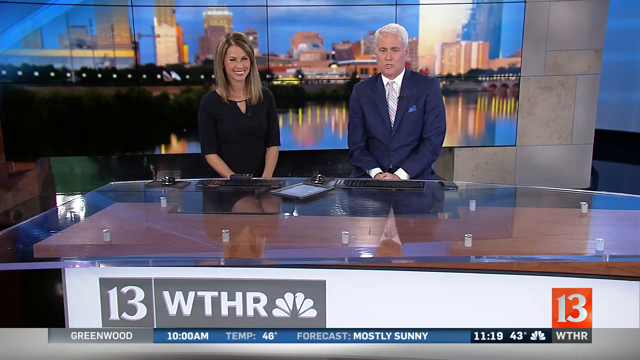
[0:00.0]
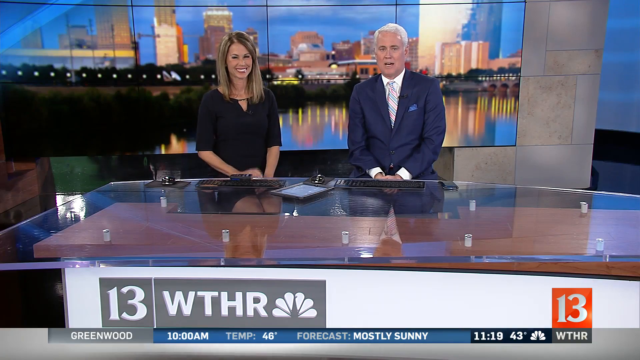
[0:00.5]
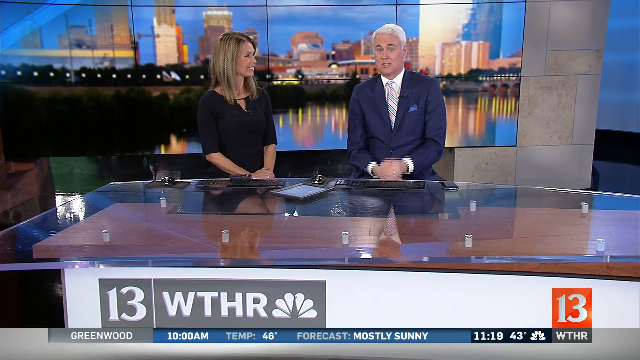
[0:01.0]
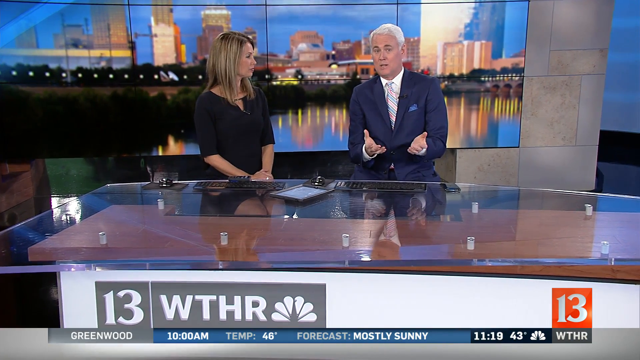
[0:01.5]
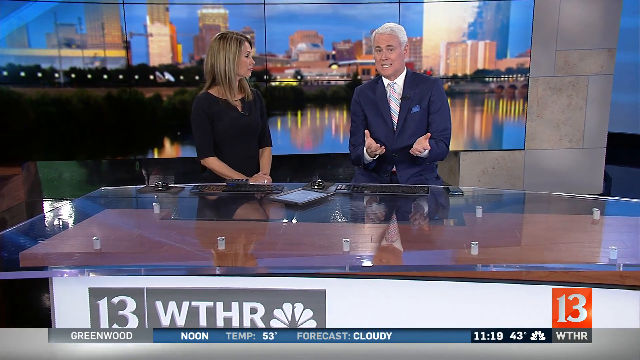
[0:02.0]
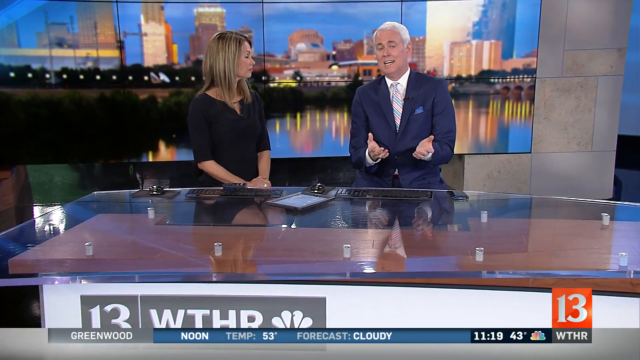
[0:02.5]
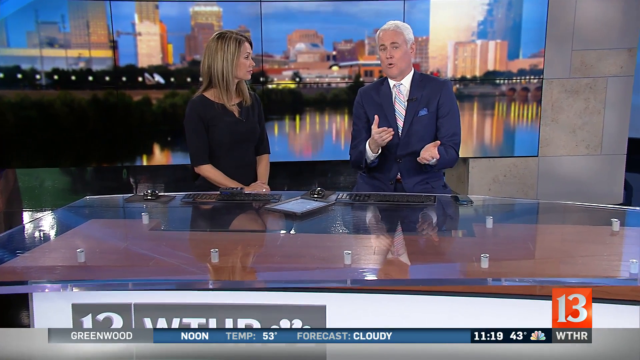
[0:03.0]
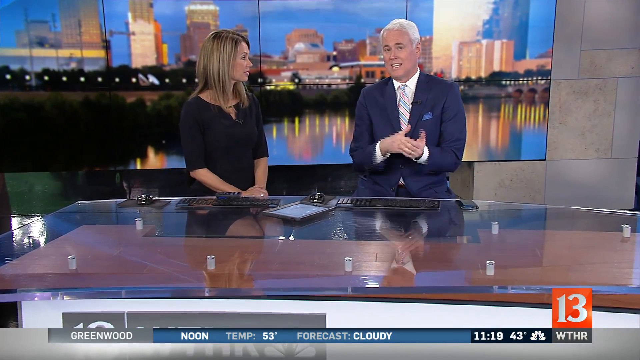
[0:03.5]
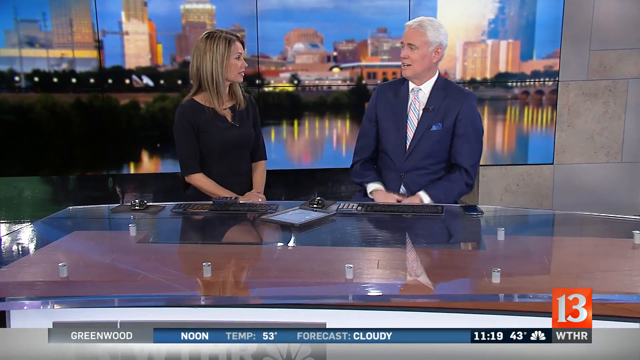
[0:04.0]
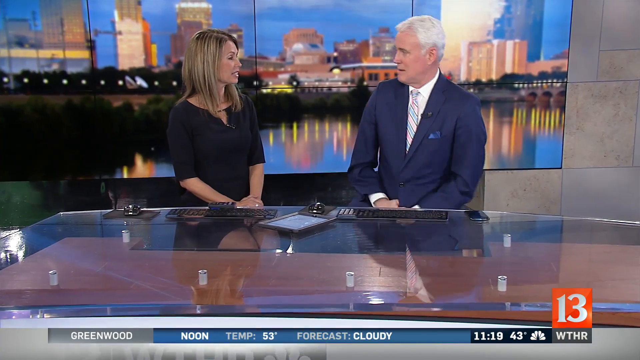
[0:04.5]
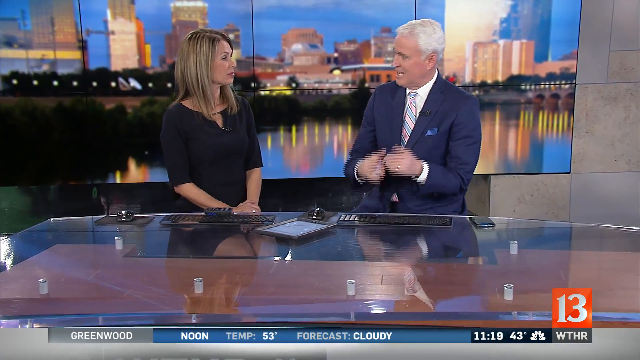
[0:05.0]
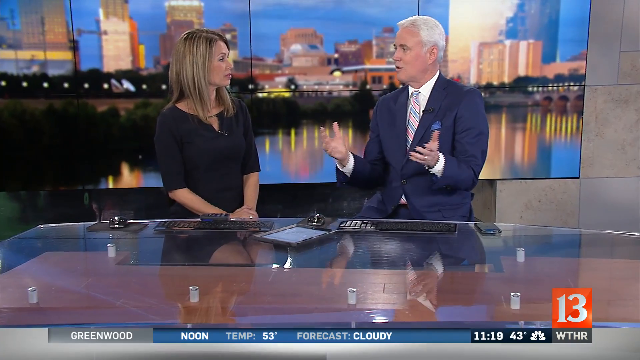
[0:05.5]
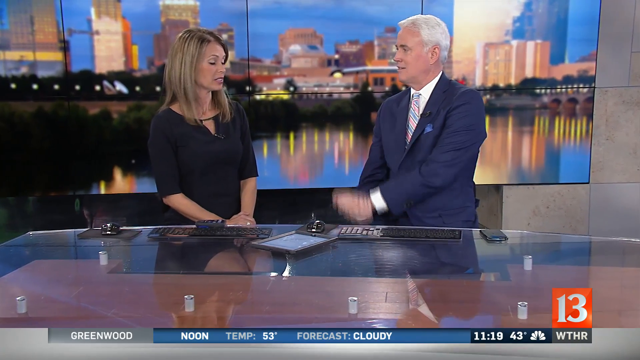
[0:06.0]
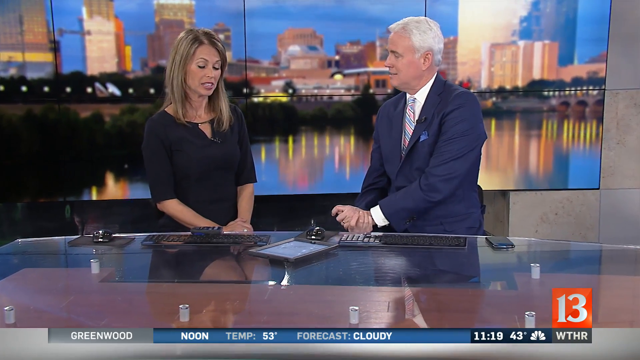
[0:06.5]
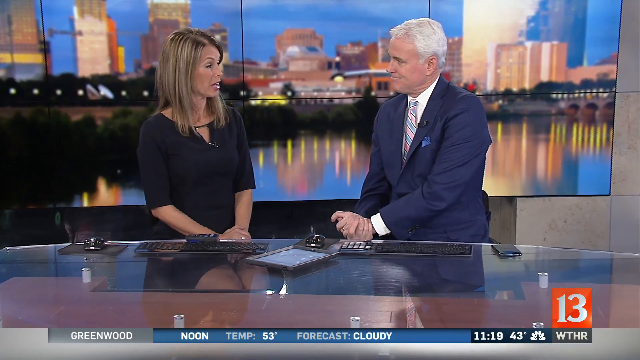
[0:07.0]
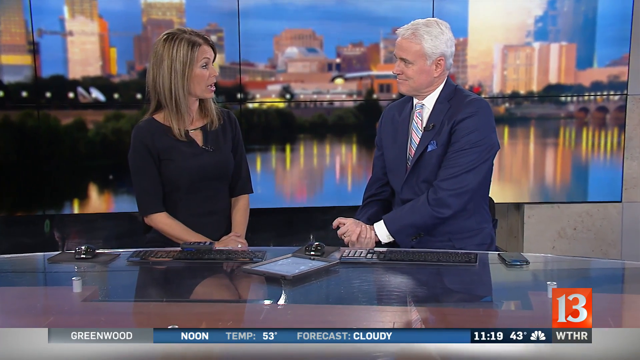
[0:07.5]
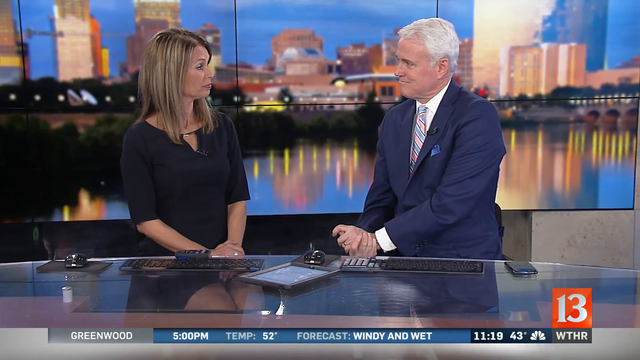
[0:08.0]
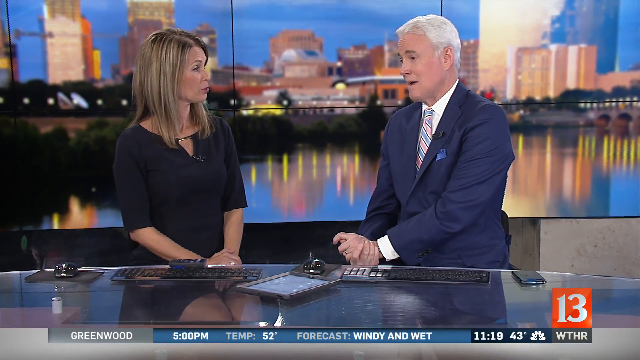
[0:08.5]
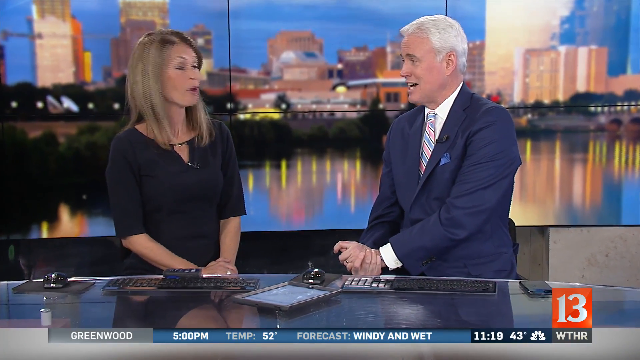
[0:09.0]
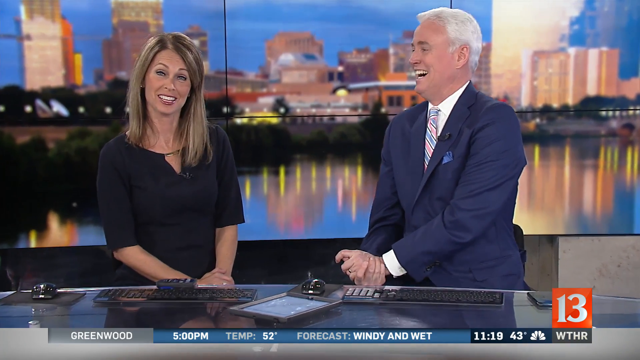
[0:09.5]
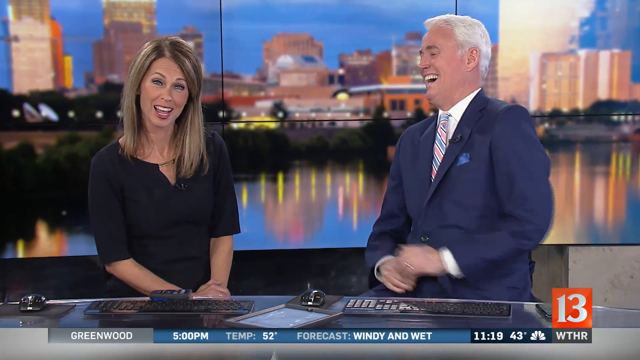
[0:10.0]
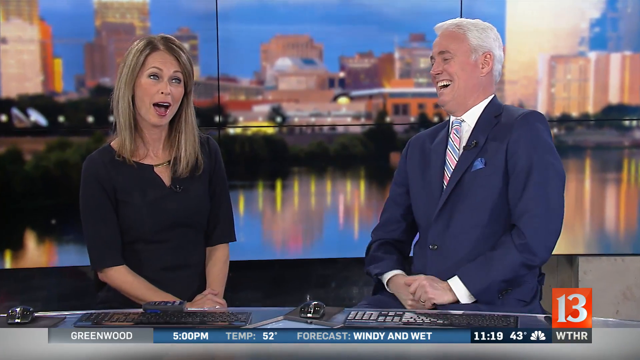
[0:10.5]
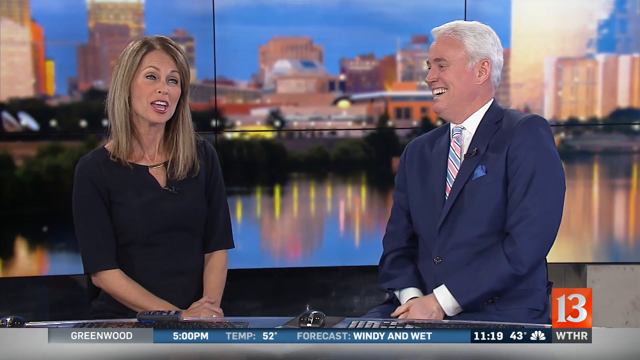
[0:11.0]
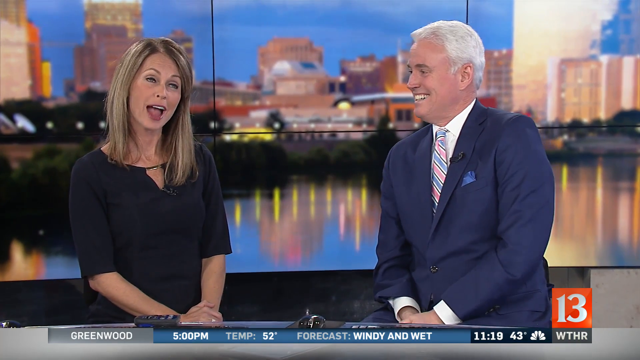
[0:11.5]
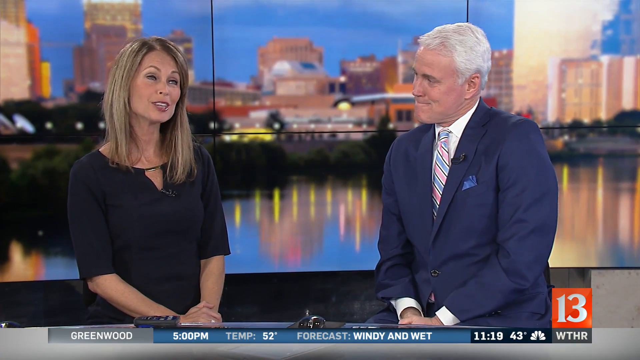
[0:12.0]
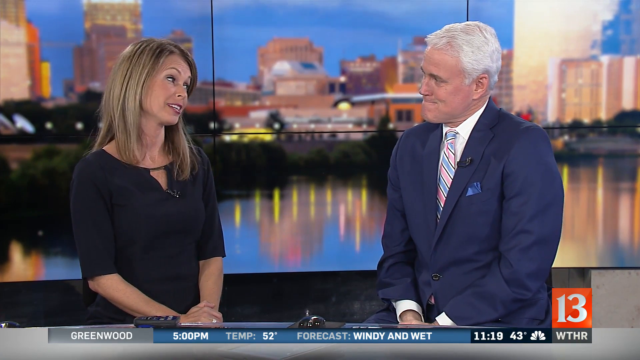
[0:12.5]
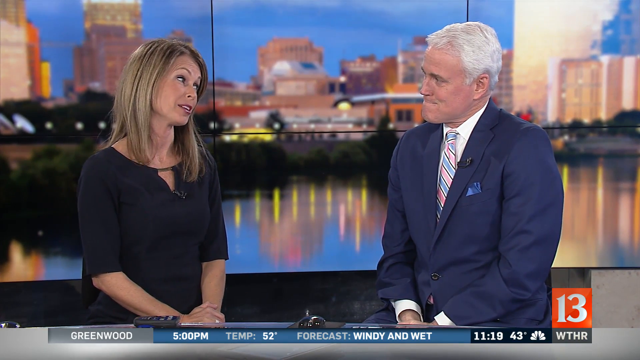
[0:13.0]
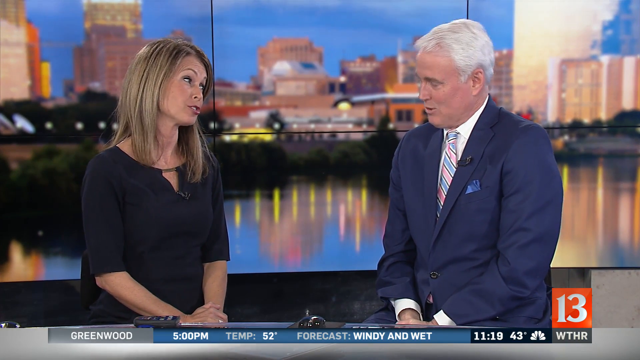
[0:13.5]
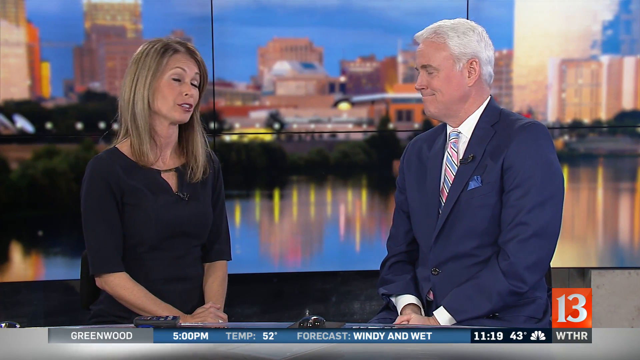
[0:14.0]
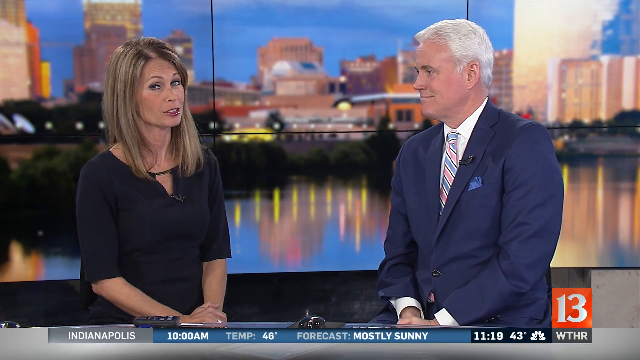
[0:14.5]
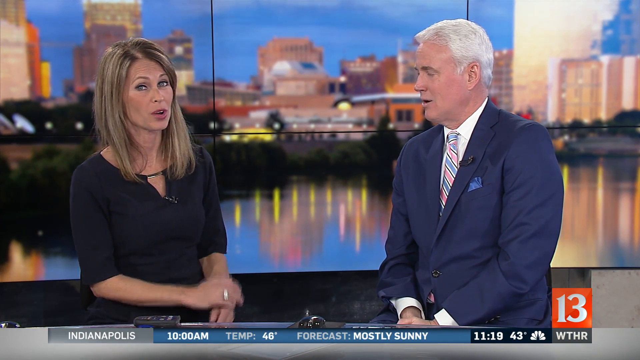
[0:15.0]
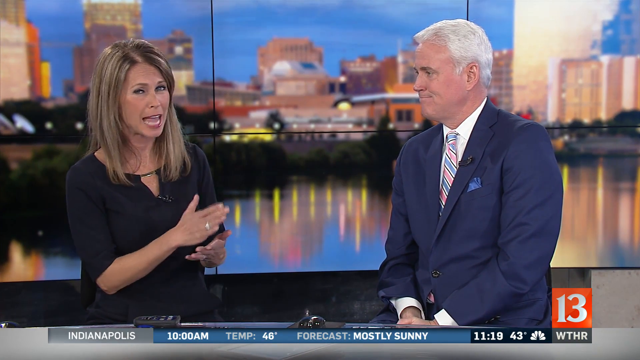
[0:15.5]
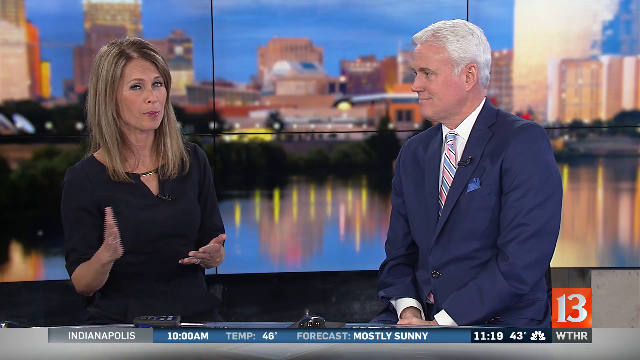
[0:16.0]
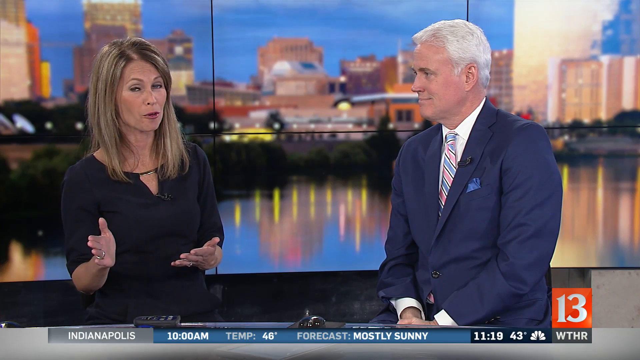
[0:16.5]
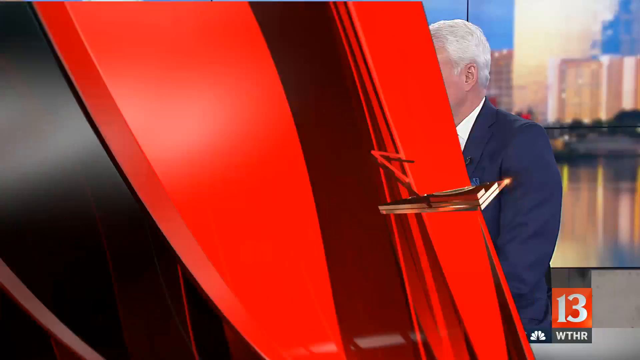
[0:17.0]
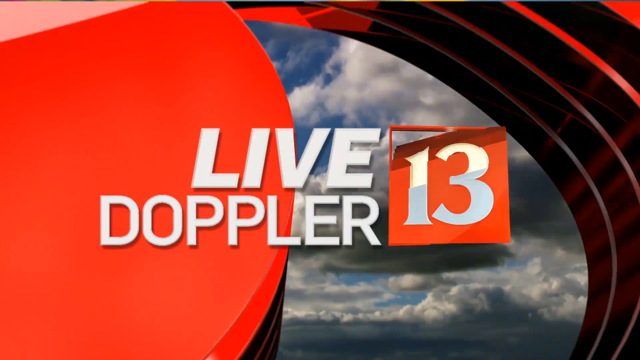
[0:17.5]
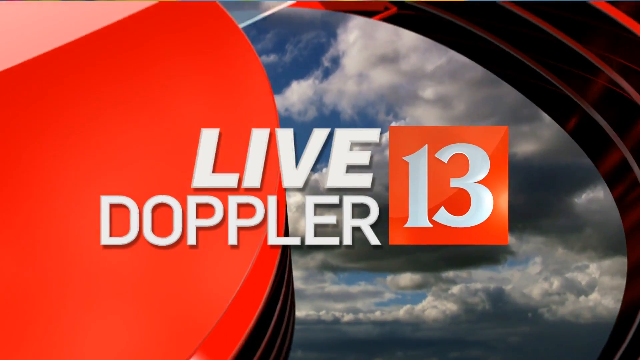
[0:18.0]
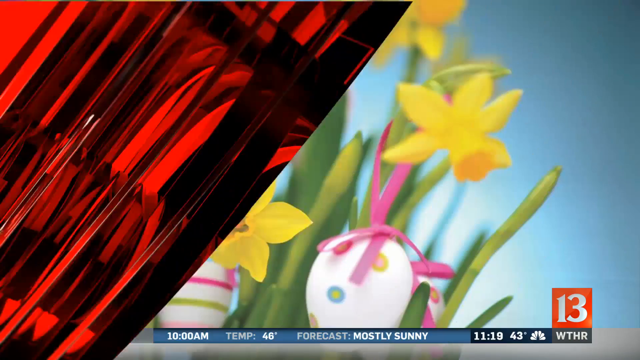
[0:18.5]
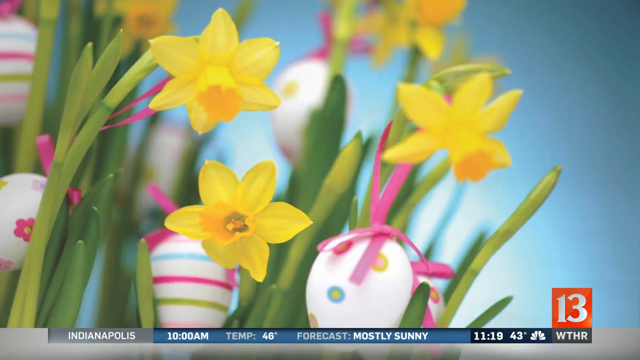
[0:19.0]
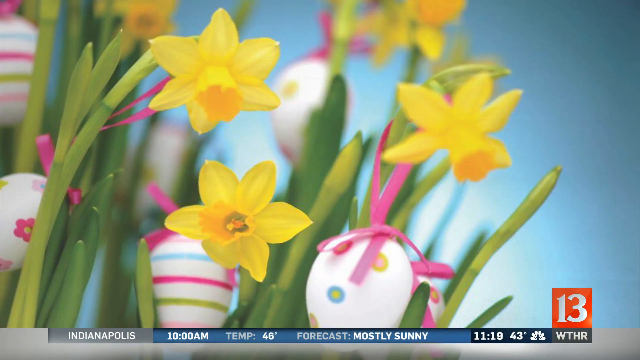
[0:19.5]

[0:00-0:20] Two news reporters are at a table with "13 WTHR" written on it in front of them, and then there is a close-up of the two. On the left is a woman in a black dress with short blonde hair; on the right is a man in a navy blue suit with a white shirt and a tie, who has short grey hair. Behind them is a big screen showing what looks like a lake, and in front of him are two keyboards and a mouse. At the bottom of the screen "Greenwood" is written, and weather updates are being given. The two continue to talk, the man smiles at one point, and then the view moves to a screen showing yellow flowers.